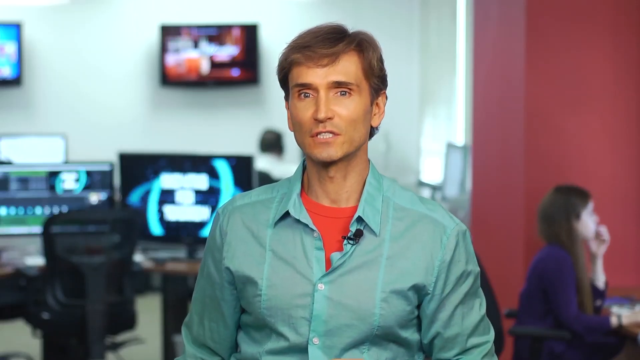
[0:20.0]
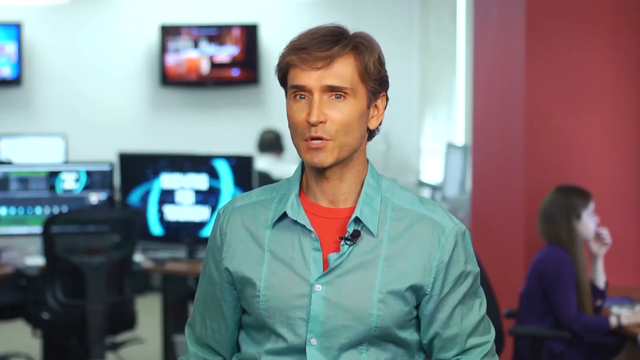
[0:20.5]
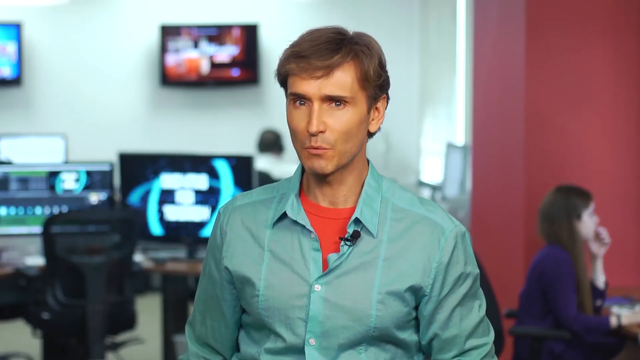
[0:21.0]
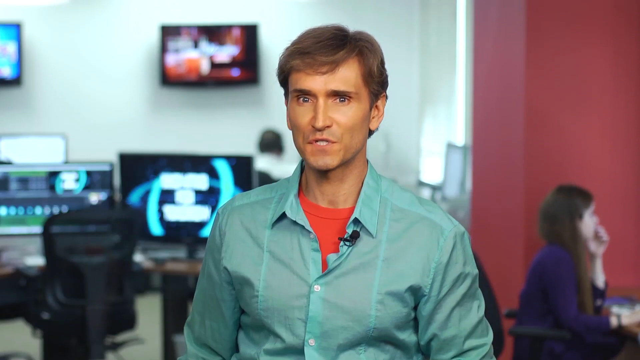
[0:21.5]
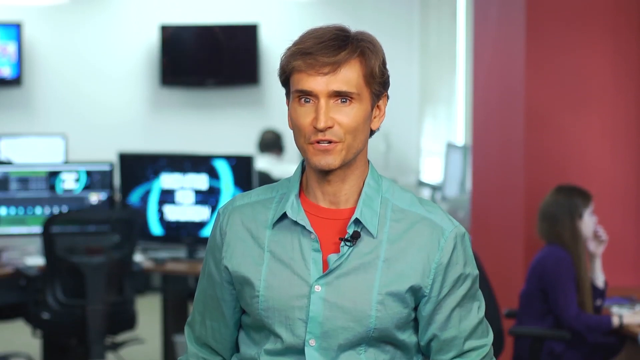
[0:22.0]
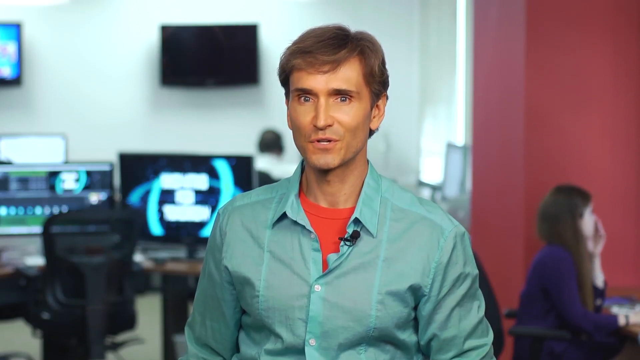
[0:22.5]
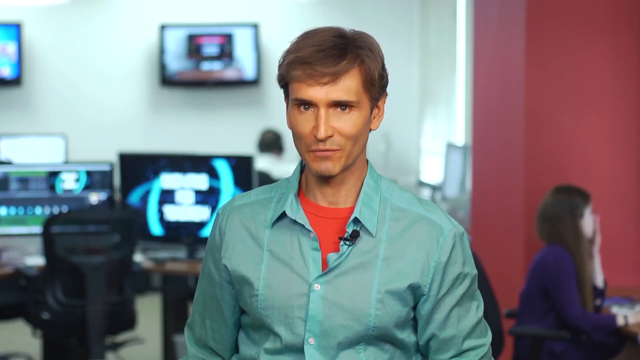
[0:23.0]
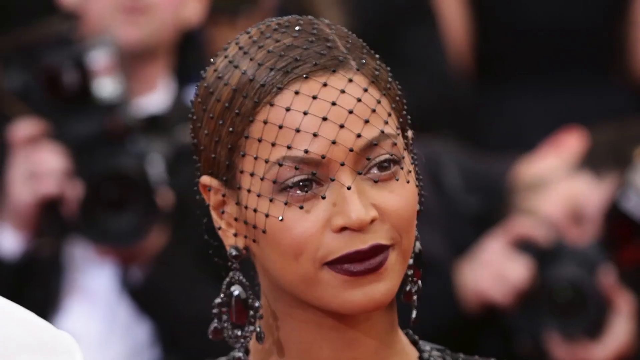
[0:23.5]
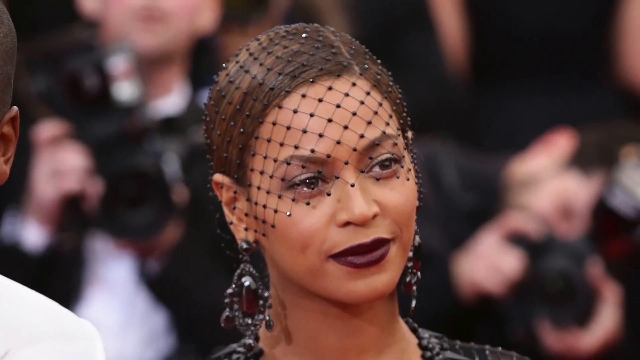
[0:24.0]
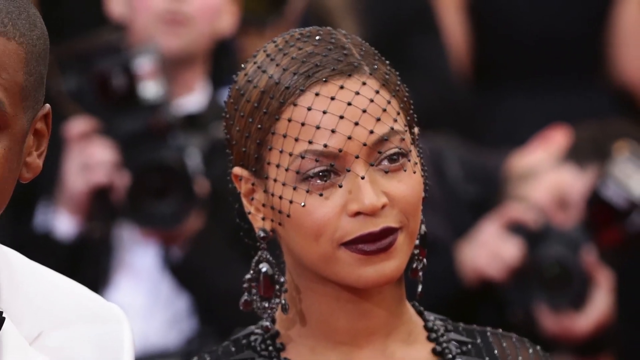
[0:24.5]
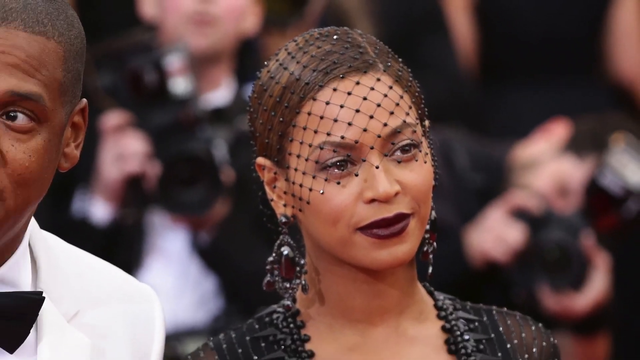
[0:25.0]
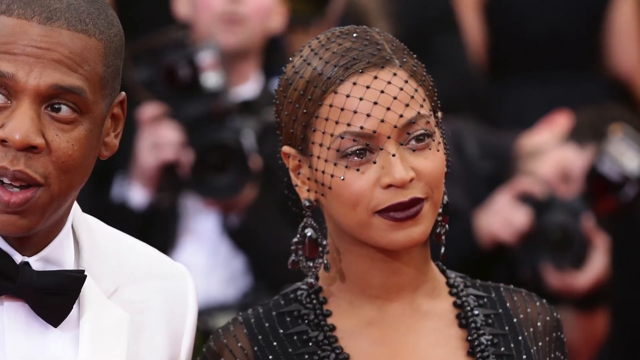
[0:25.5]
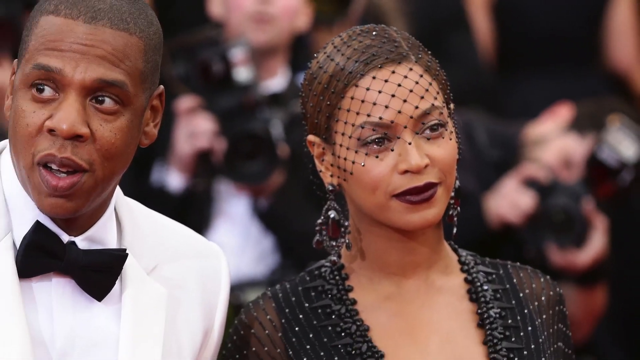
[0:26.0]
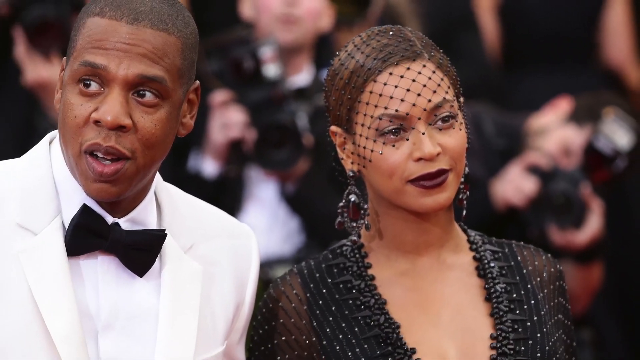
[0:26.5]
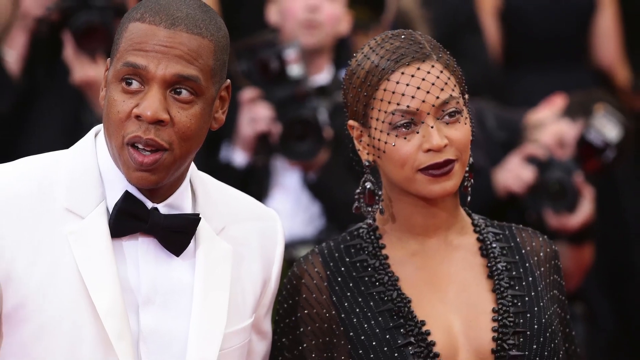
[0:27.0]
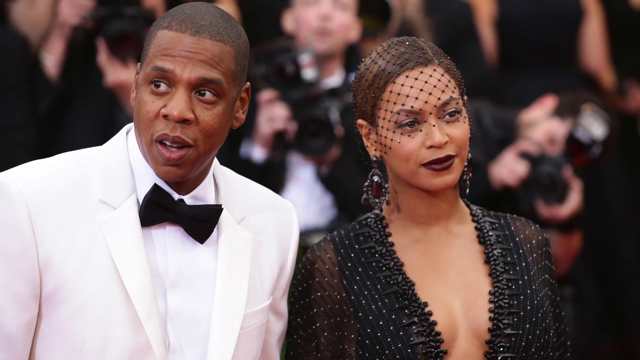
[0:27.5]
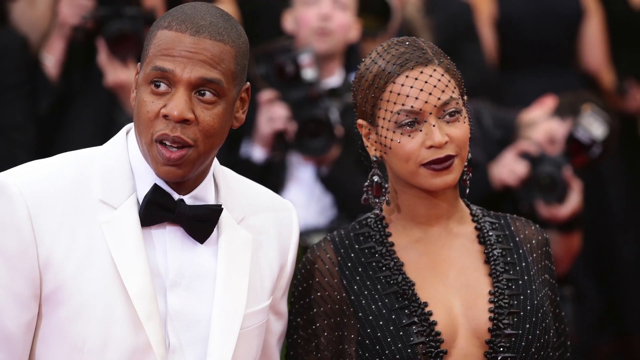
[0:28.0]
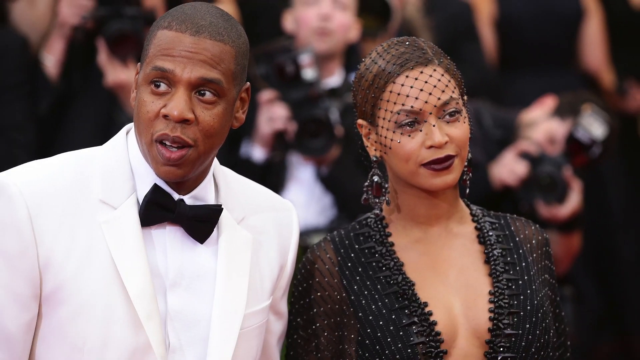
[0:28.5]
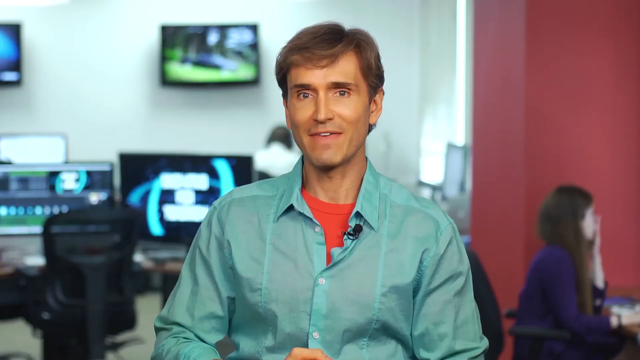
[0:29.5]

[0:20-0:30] The reporter talks, looking at the center of the camera and nodding his head up and down. The video cuts to an image of Jay-Z on the left-hand side, wearing a white tuxedo with a black bow tie and looking toward the left-hand side of the camera. Beyonce is to the right of him, wearing almost a veil and big flashy earrings, and underneath a patterned, almost see-through top with black straps to the left and right. The video then cuts back to the reporter in the green shirt, nodding his head.